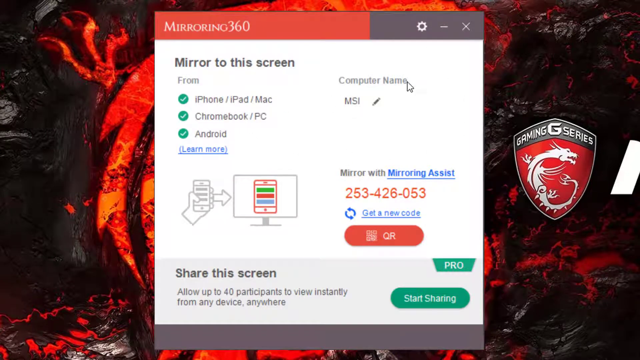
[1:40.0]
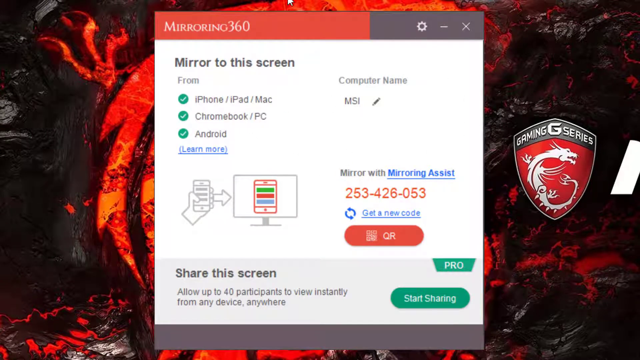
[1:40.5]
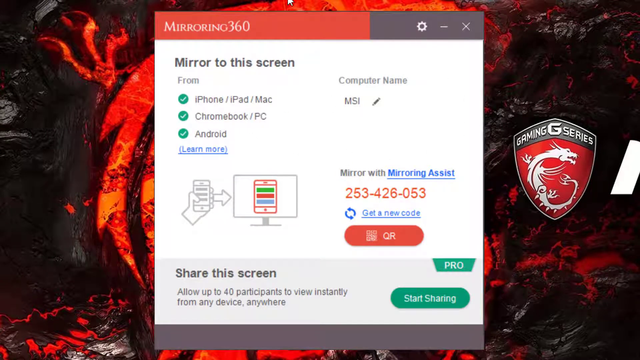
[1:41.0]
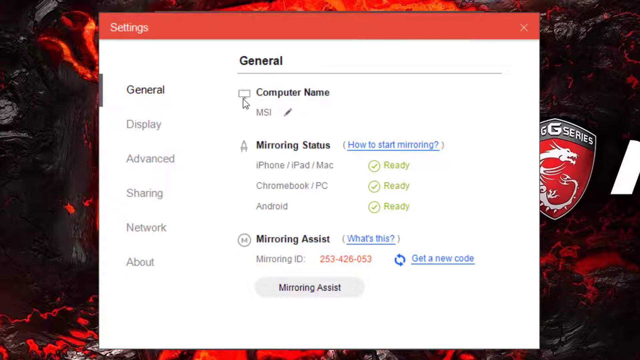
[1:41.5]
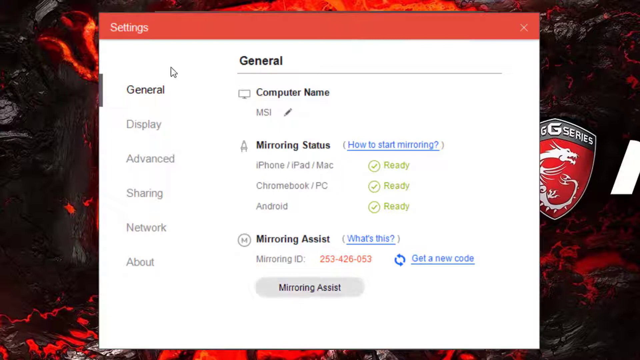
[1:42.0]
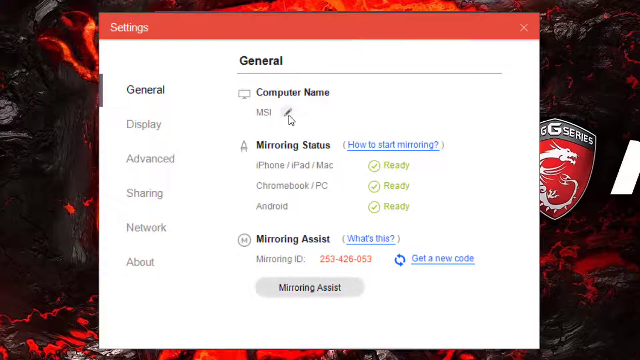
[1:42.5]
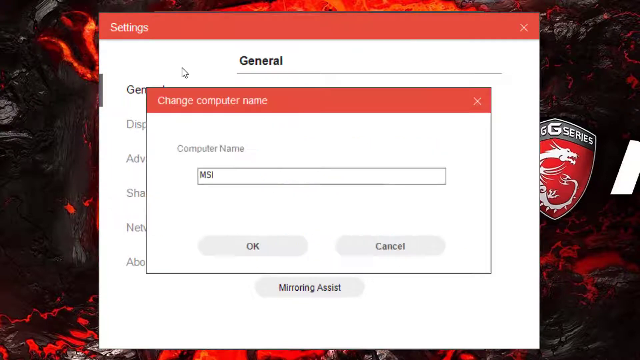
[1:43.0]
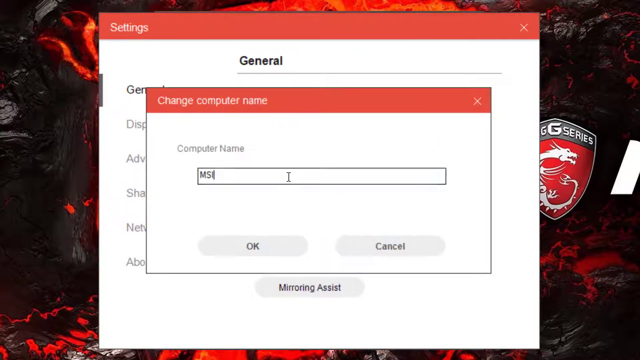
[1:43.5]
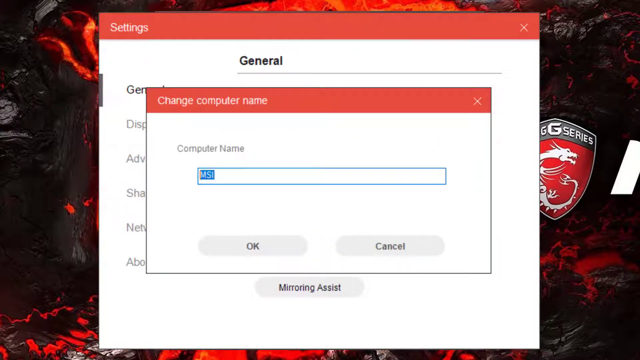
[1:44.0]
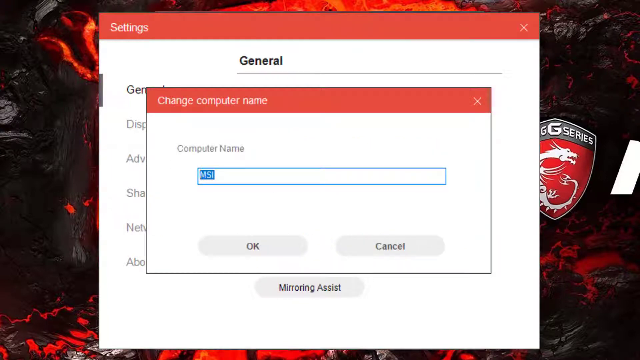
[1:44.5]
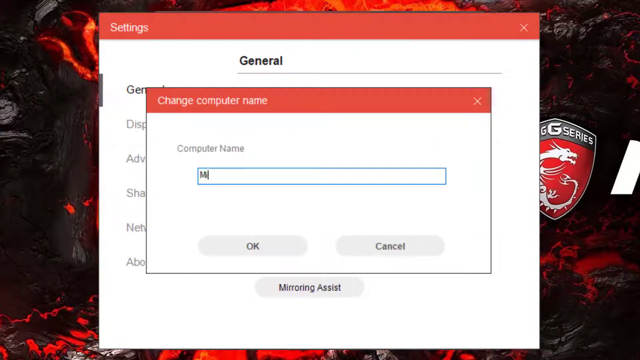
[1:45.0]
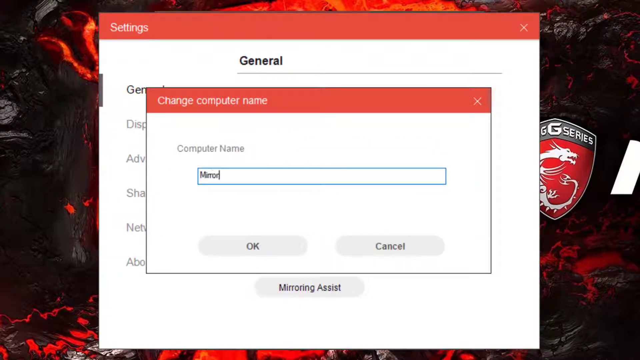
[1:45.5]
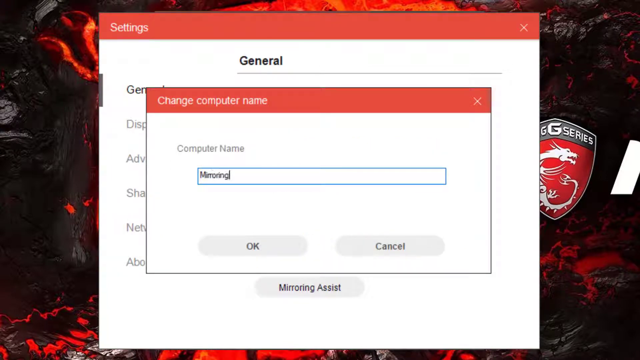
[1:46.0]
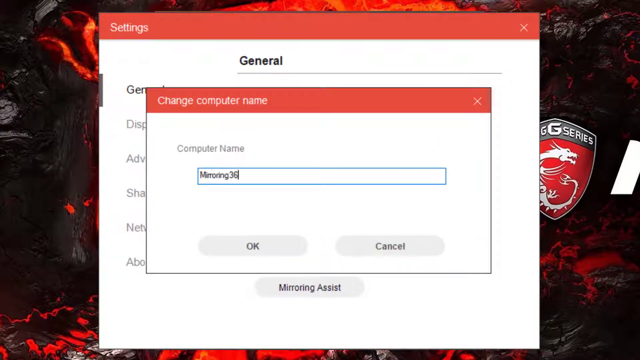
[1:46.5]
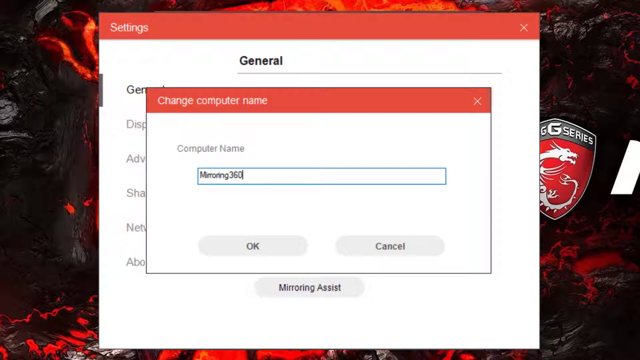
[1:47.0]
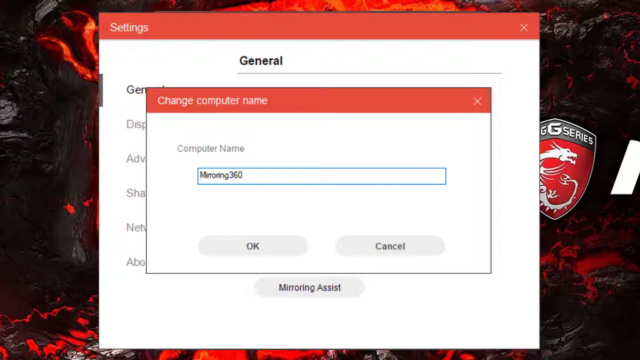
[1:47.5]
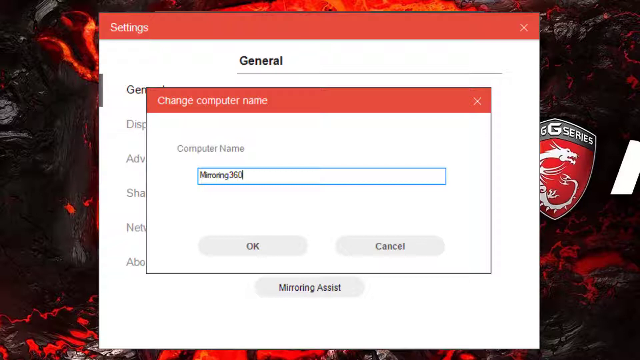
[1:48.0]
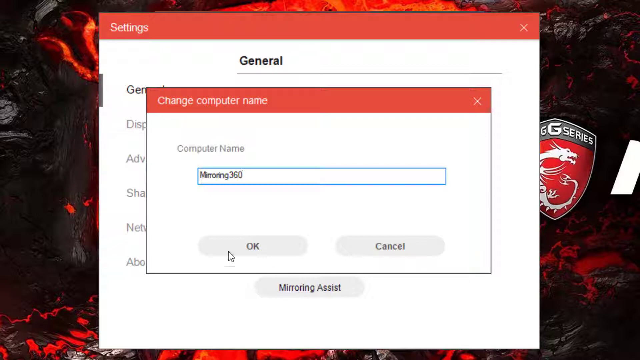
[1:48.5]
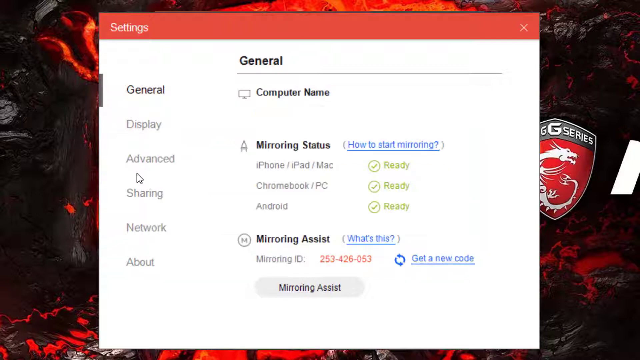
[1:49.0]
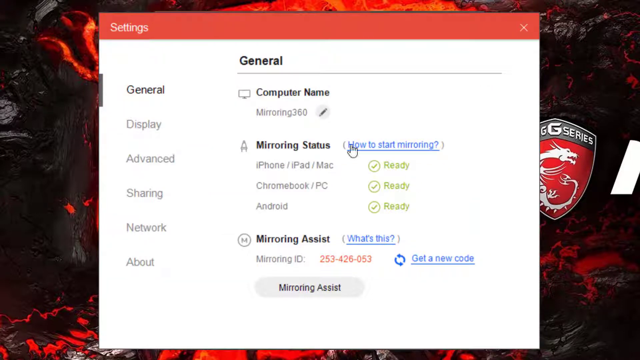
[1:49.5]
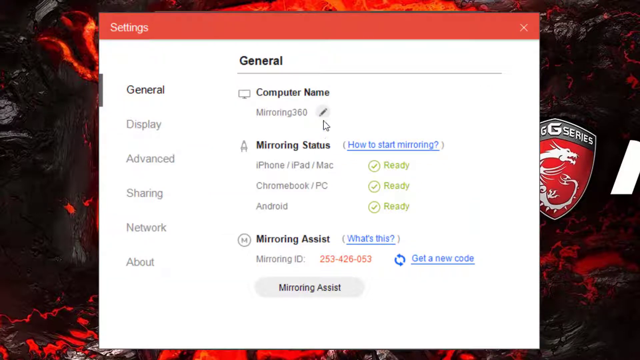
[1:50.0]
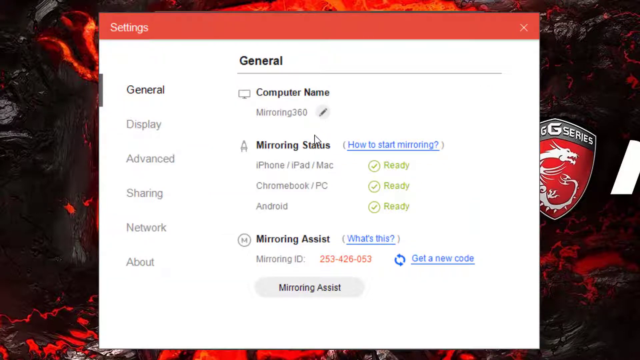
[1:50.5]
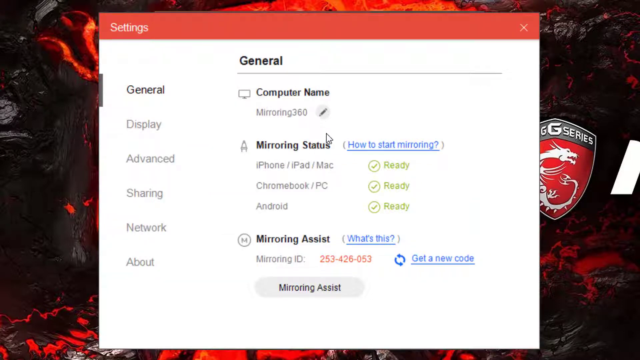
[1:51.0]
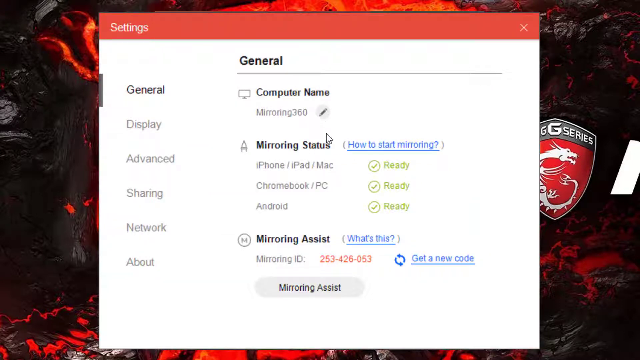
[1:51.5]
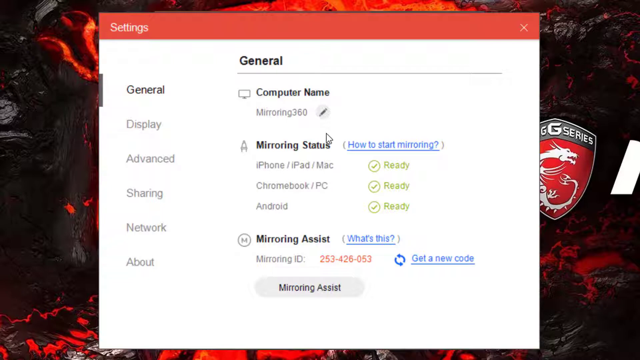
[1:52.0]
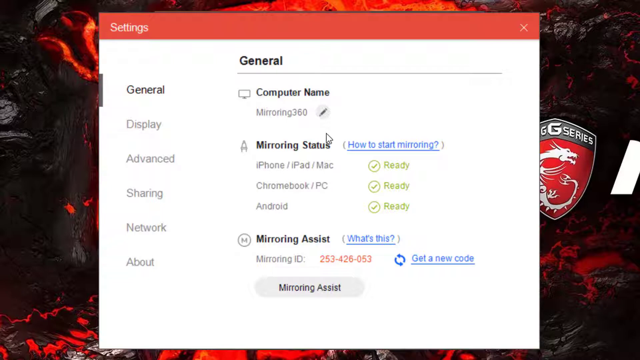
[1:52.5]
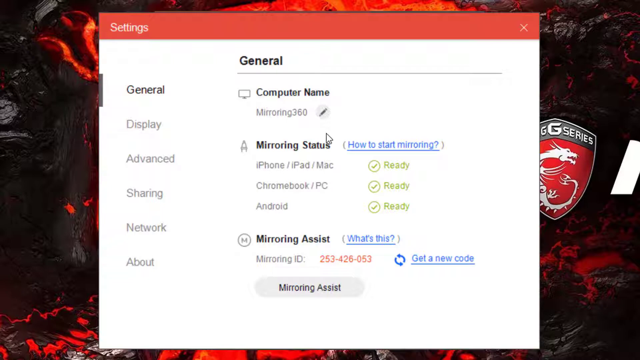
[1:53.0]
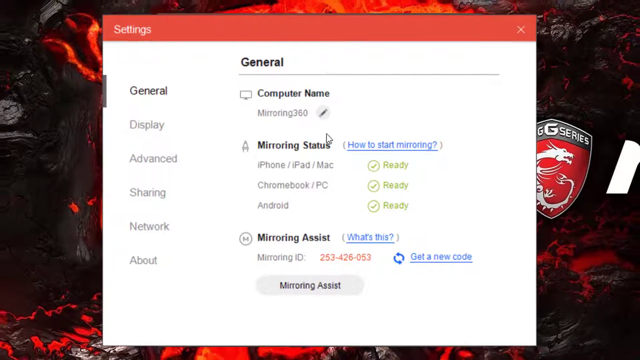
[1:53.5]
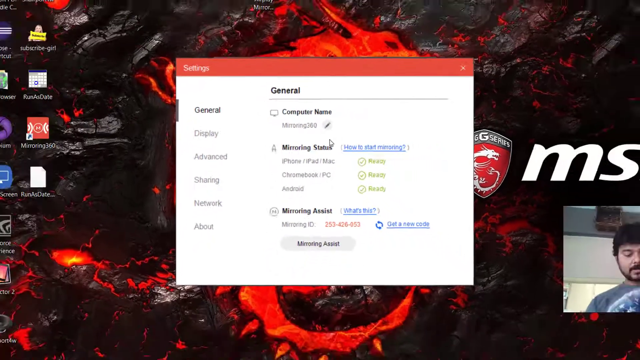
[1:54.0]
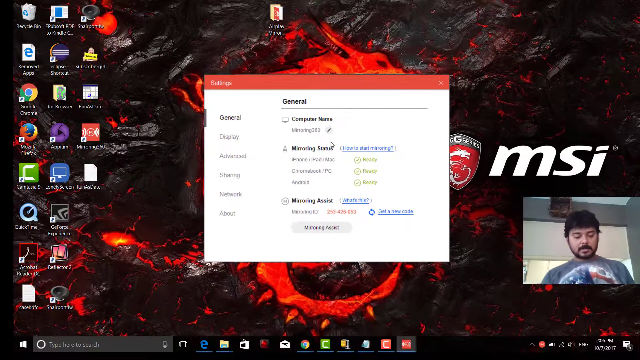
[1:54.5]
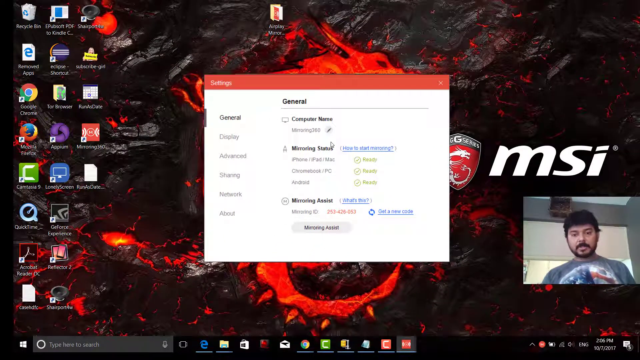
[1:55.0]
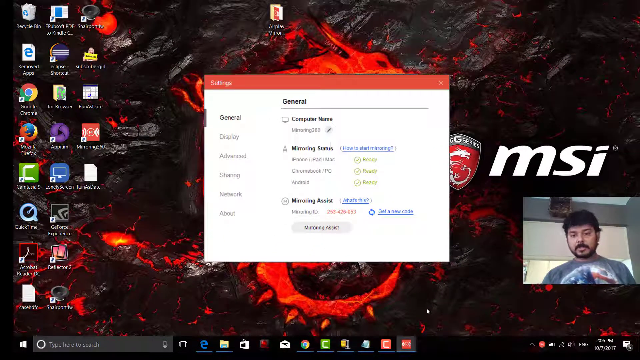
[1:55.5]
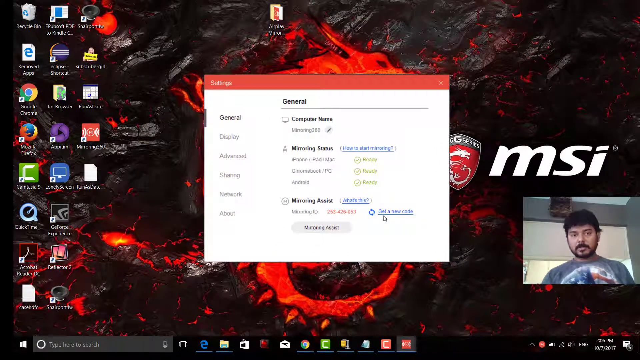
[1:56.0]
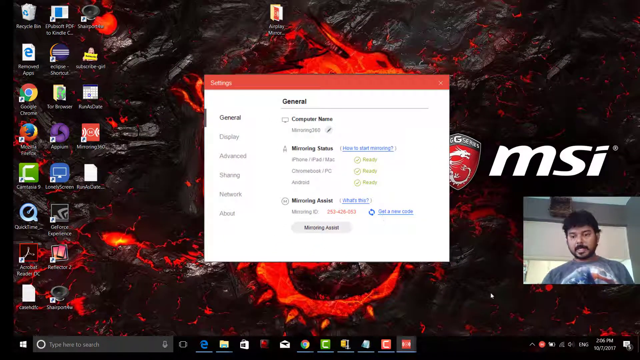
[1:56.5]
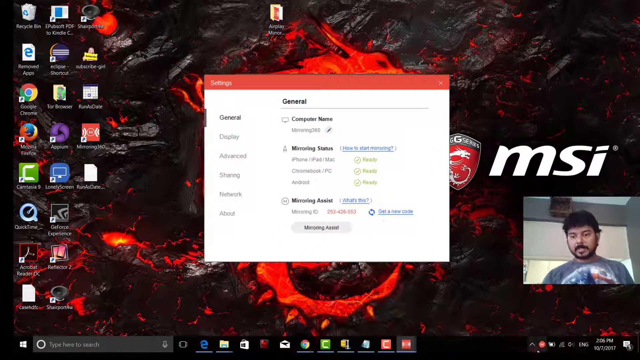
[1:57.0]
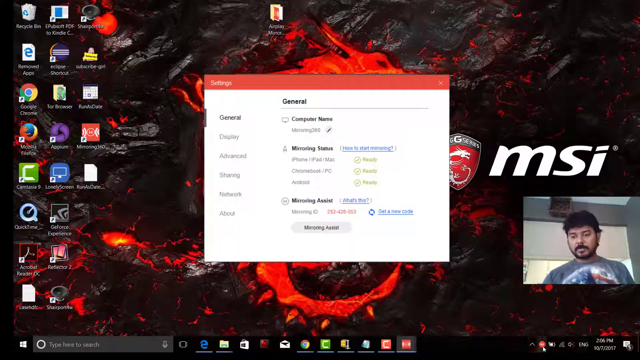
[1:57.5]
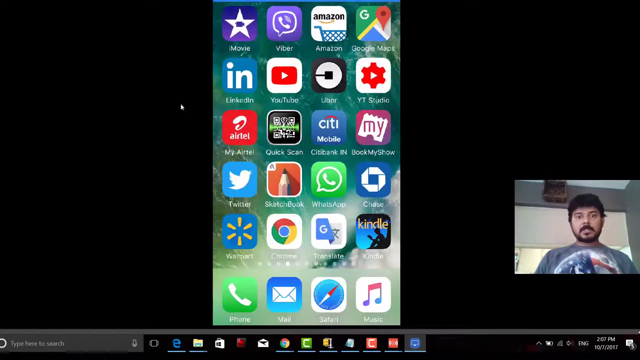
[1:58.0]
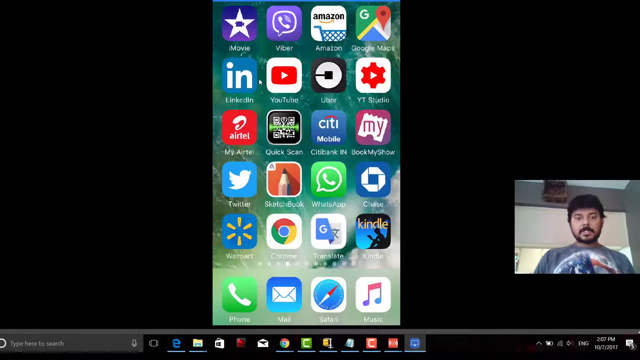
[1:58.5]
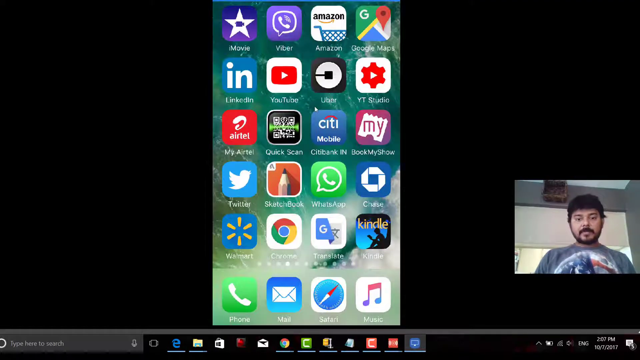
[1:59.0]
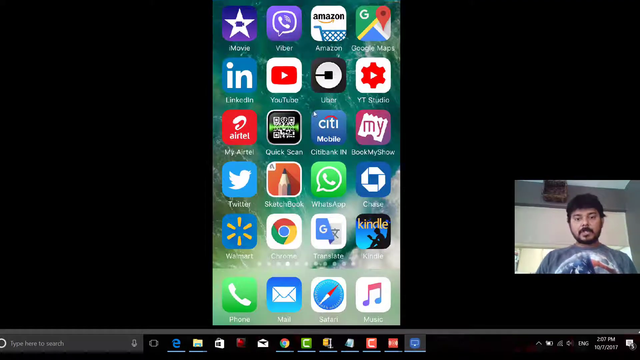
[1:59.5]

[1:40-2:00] A full screen pops up showing general information for the mirroring 360 program. The man clicks on the box and moves his cursor around, then shows his phone tied in with what he is doing. The window says "mirror with mirroring assist" and shows a code, "253-426-053," along with an option to get a new code or use a QR code. In the background, where the dragon is, it says "gaming G series." A section at the bottom says "share this screen," with a button that says "start sharing." There are also options for using it on iPhone, iPad, Mac, Chromebook, PC, or Android.